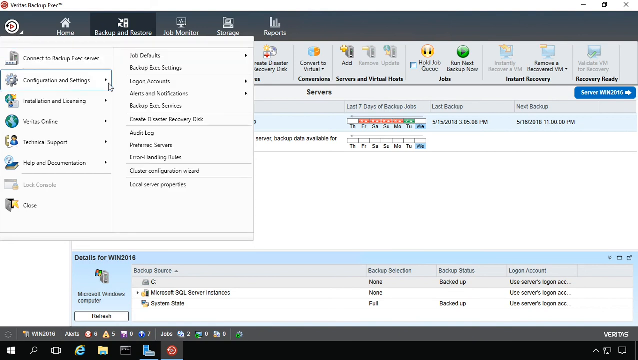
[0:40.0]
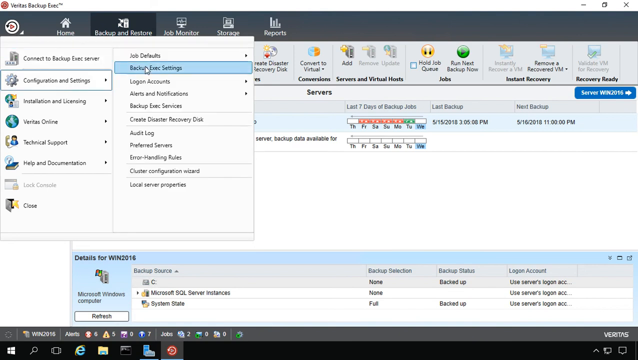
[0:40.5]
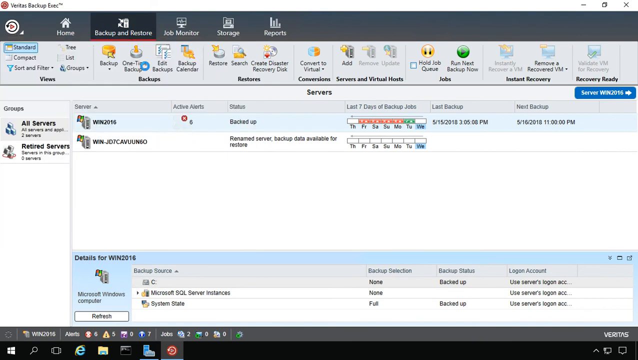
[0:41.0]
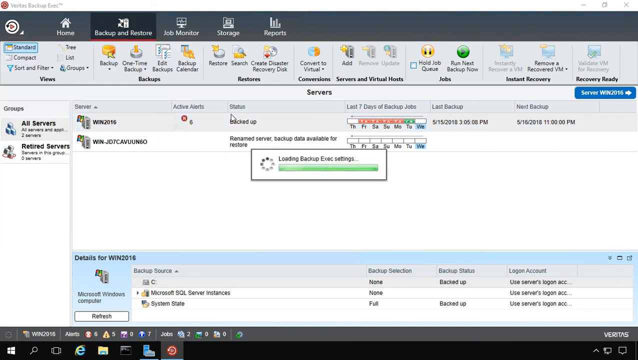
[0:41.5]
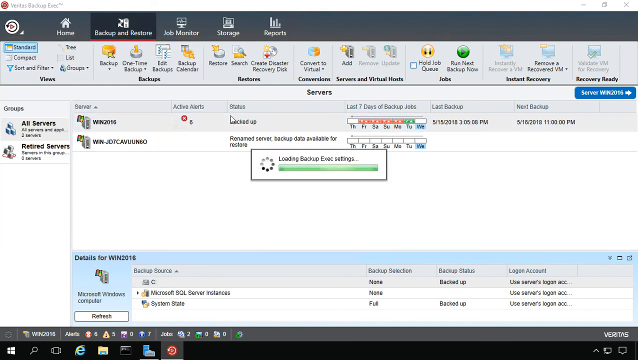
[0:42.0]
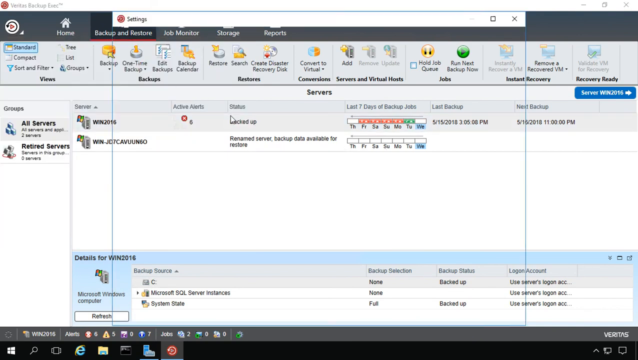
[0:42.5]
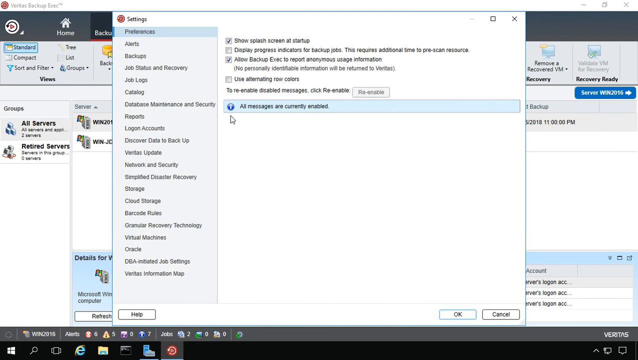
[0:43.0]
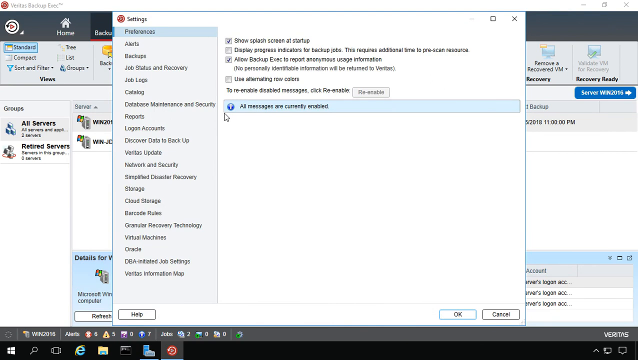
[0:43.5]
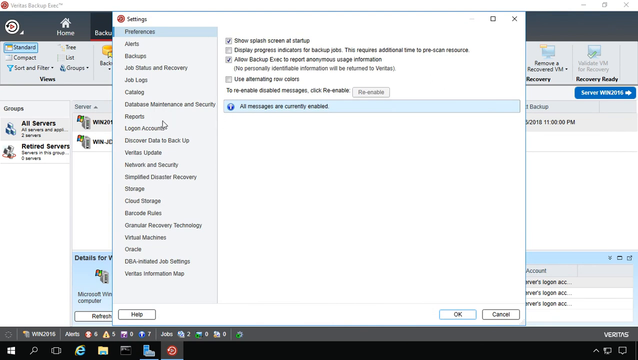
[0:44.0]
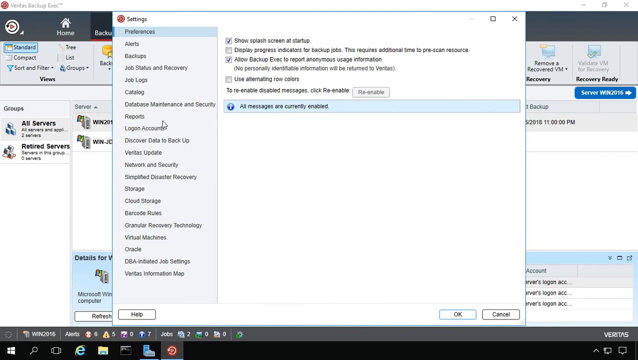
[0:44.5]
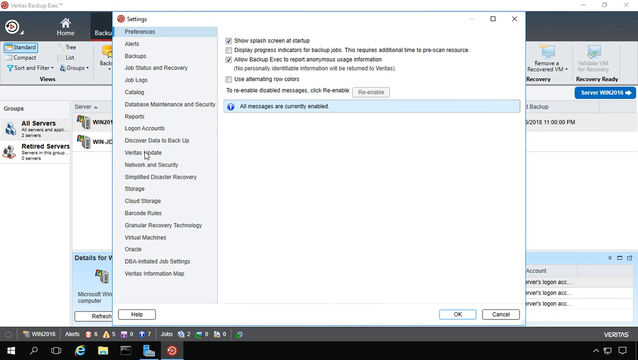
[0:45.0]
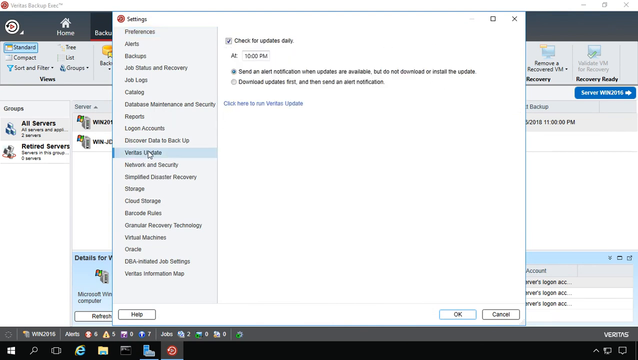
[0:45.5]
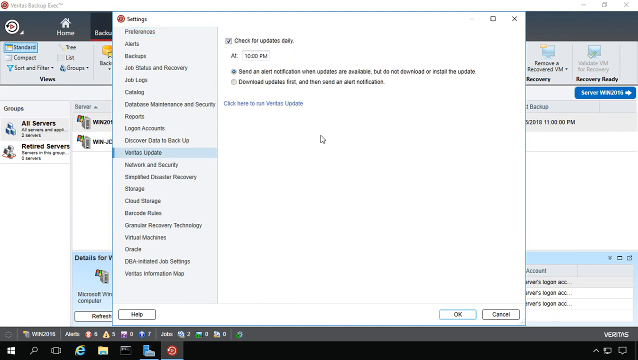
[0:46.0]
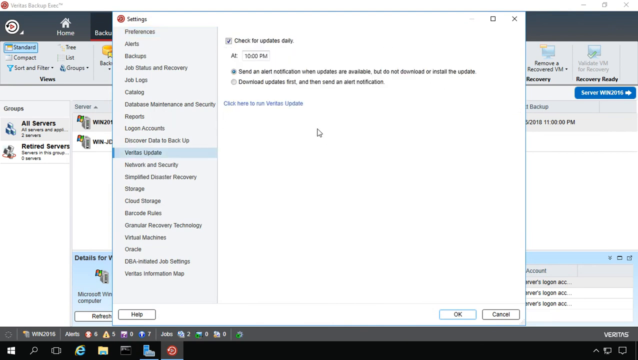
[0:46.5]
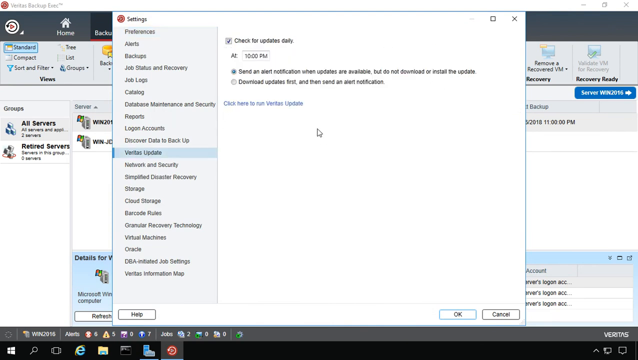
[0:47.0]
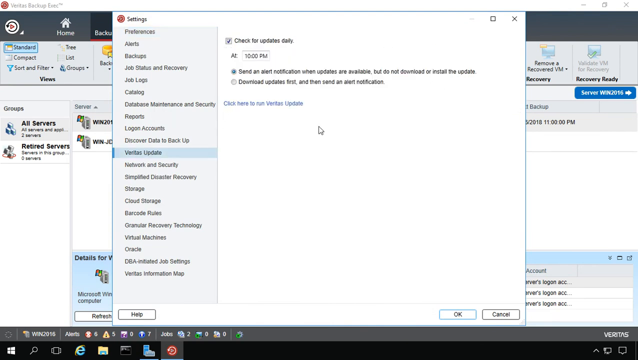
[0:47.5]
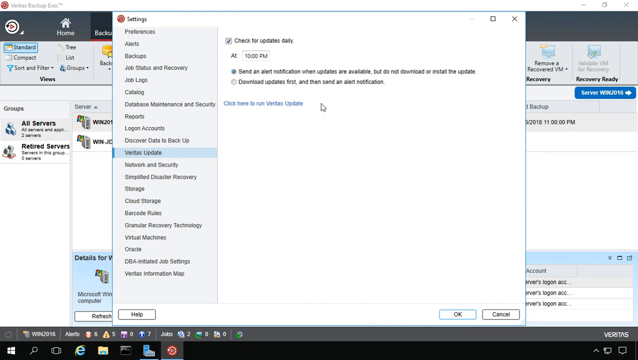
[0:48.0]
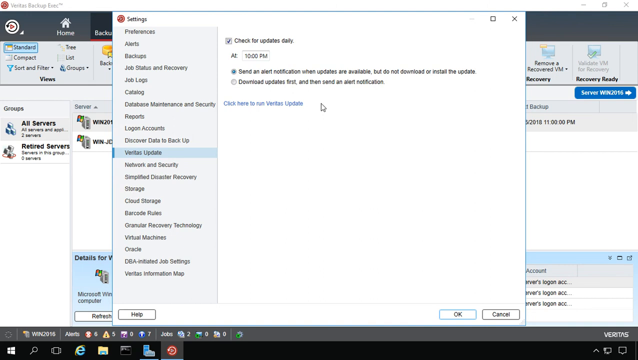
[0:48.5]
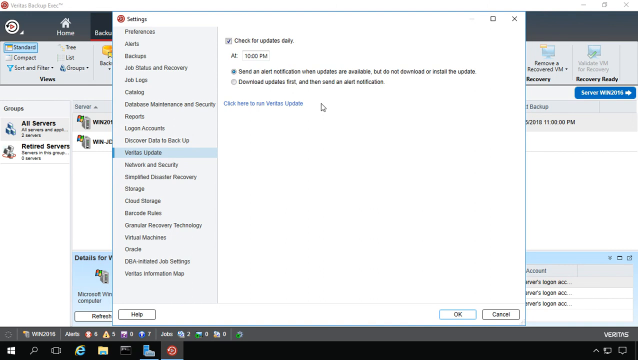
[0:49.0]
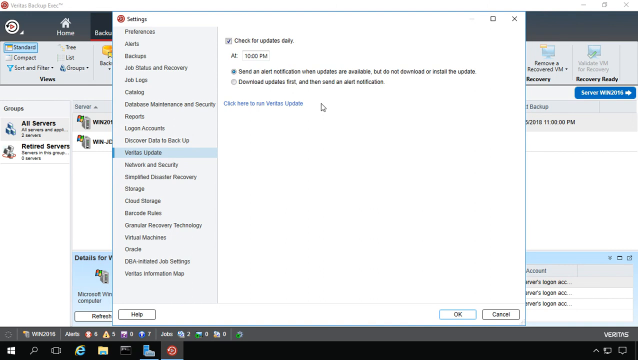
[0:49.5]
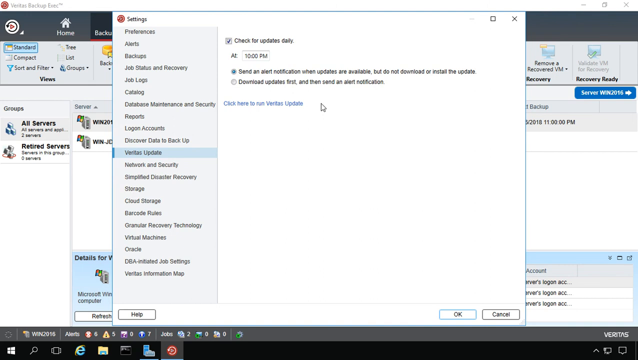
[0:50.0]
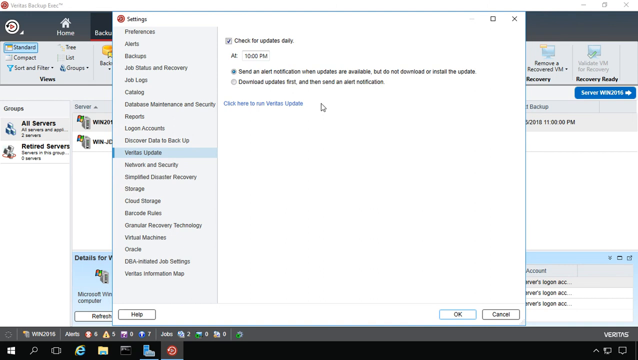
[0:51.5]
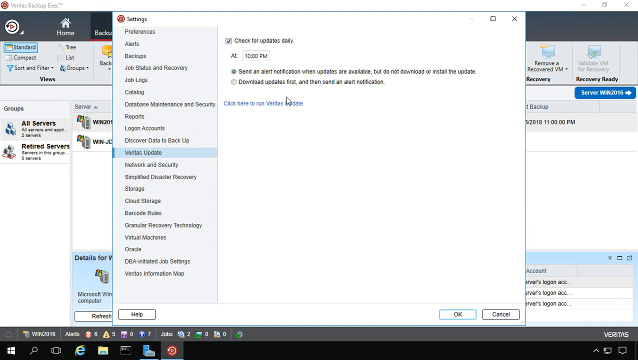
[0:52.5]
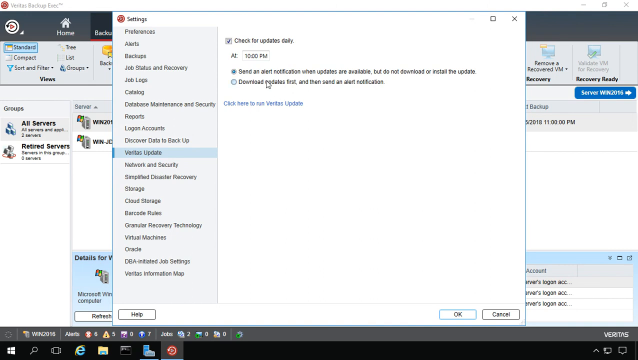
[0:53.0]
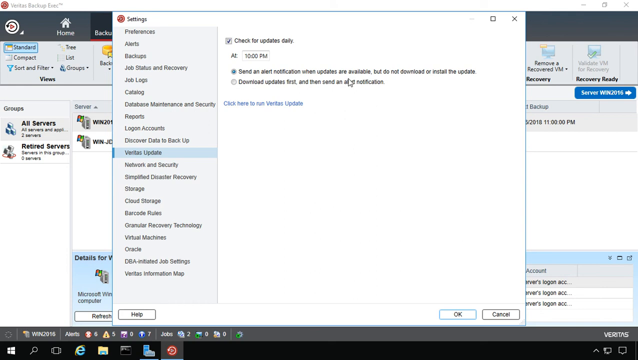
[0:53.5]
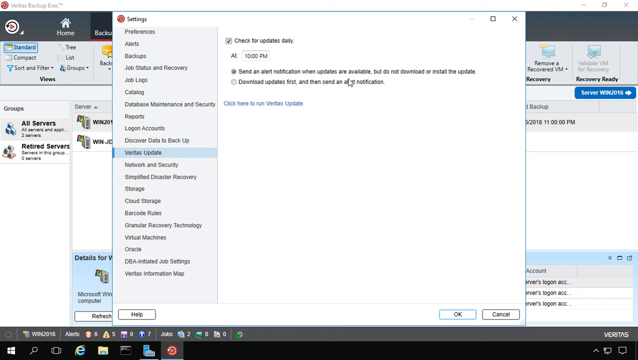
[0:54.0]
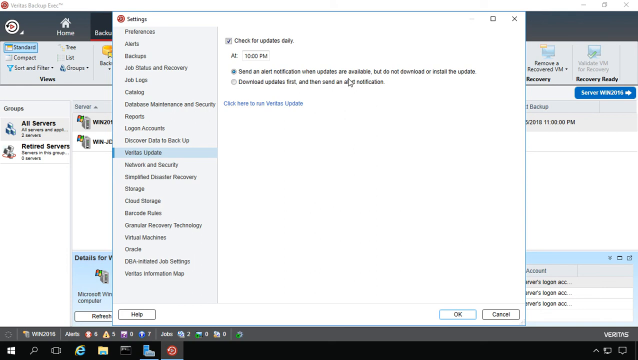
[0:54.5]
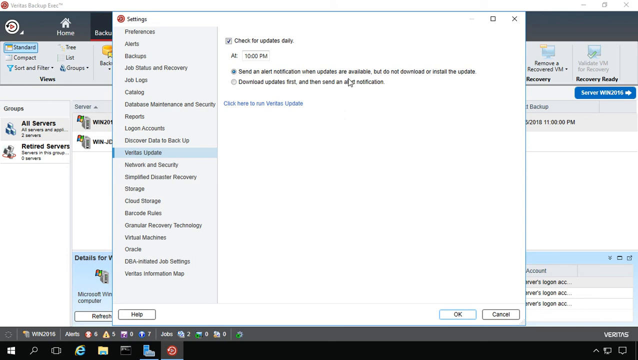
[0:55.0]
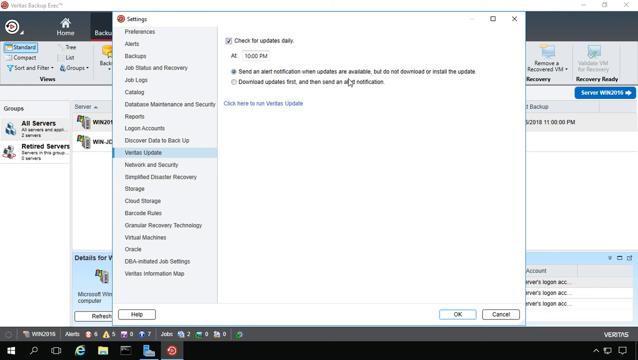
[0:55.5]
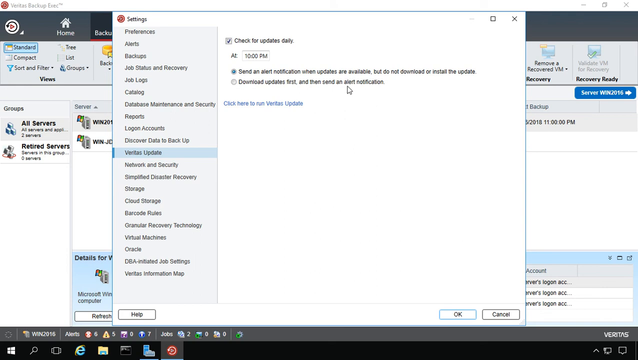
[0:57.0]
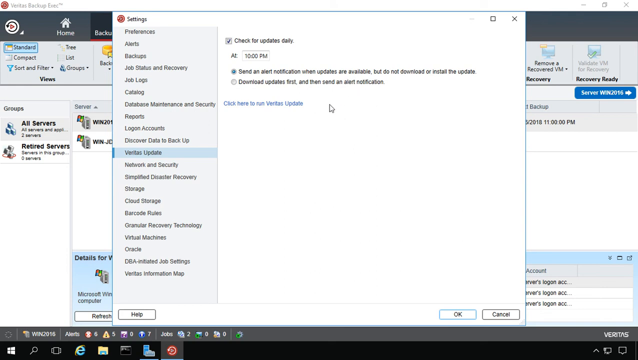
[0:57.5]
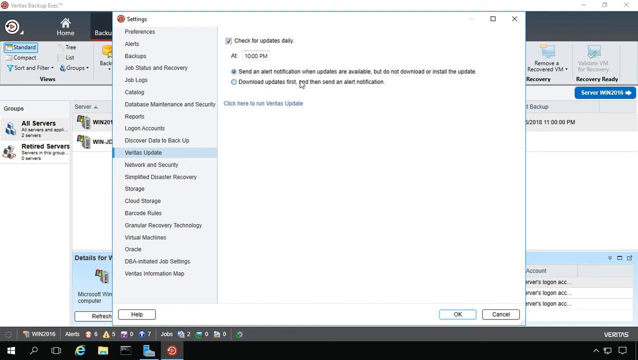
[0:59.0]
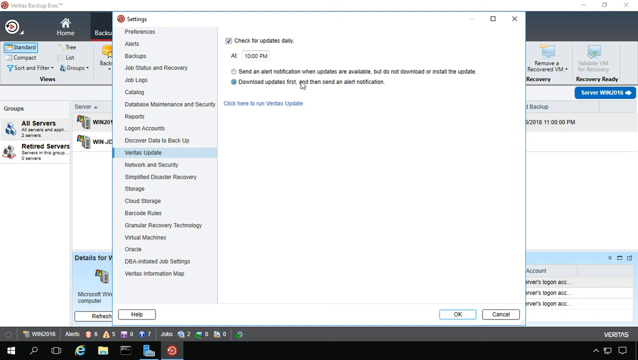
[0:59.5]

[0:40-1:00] In the configuration menu, the person clicks on the option to check the Backup Exec settings. While it loads, the main screen remains unchanged in the background. A settings screen then opens. On its left side is a list of categories, including preferences, alerts, backups, job status and recovery, job logs, catalogs, reports, logon accounts, updates, cloud storage, Oracle, Veritas information map and barcode rules. The person clicks on Veritas Update, which shows that it can check for updates regularly every day, with the selected choice being to send an alert without downloading anything when an update is found. The person changes this setting so that updates are downloaded first and a notification is sent afterwards.